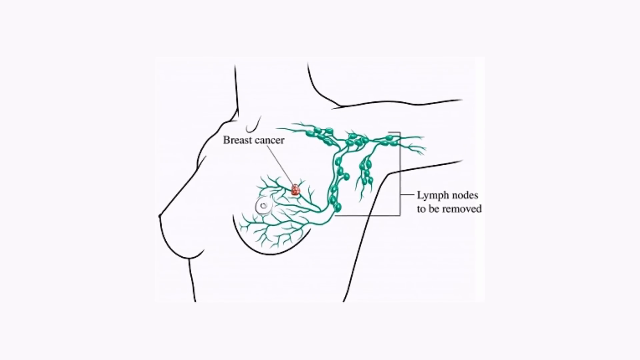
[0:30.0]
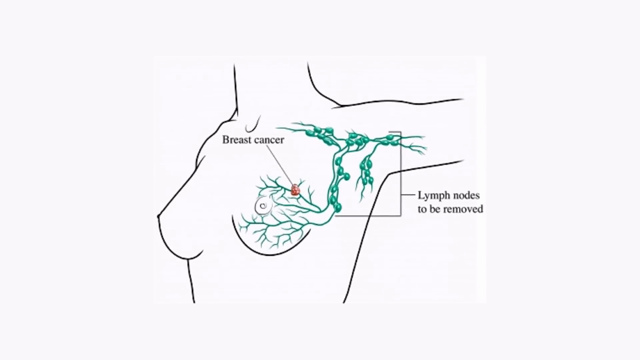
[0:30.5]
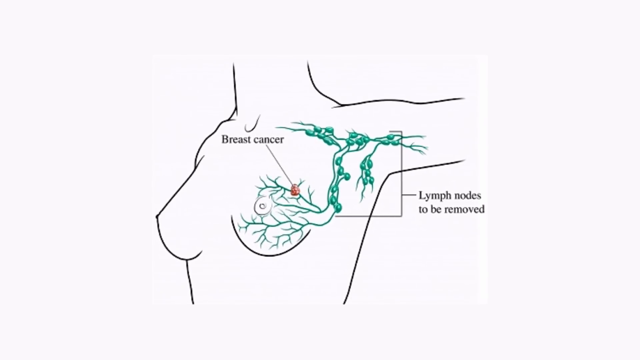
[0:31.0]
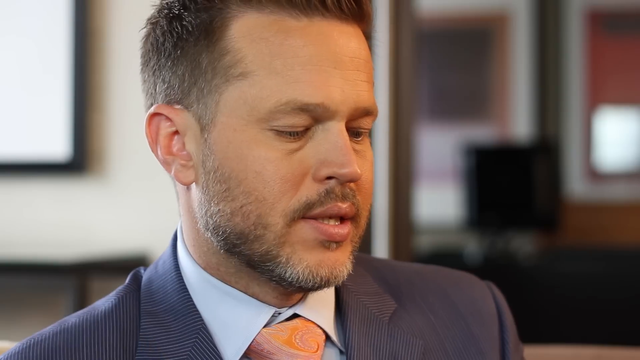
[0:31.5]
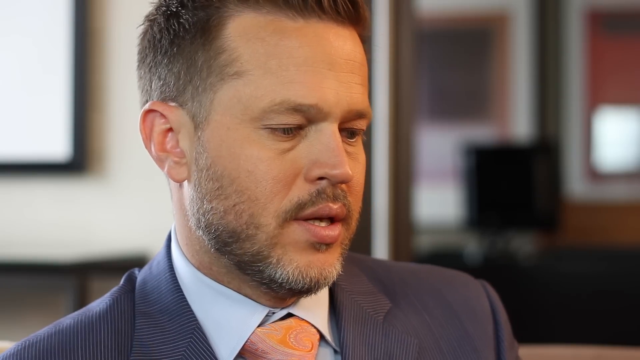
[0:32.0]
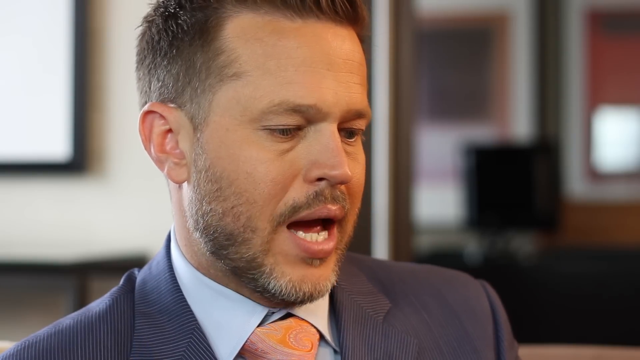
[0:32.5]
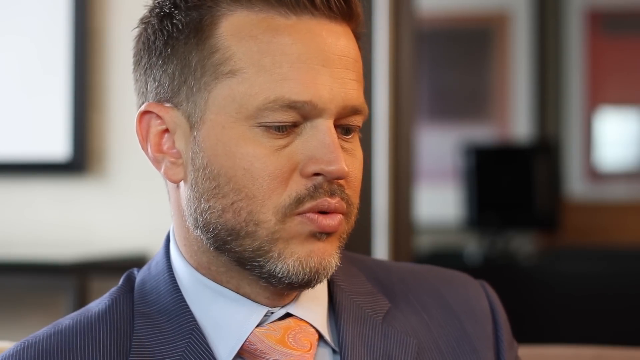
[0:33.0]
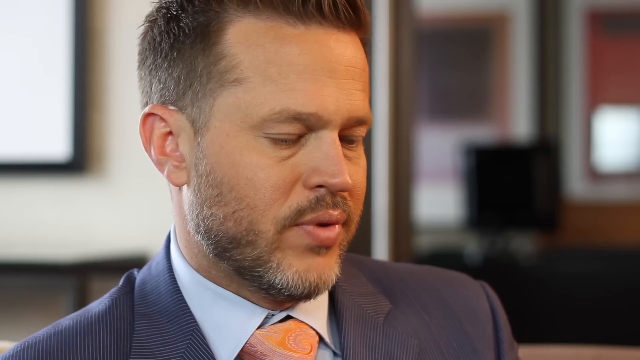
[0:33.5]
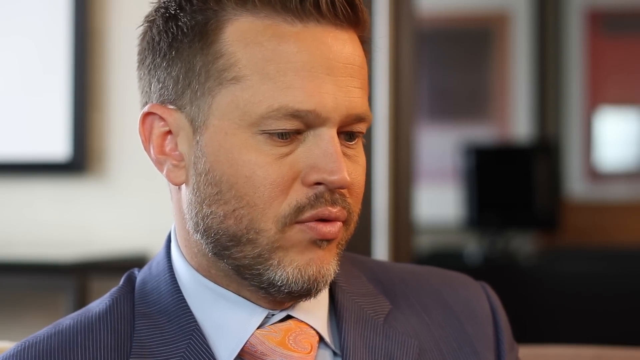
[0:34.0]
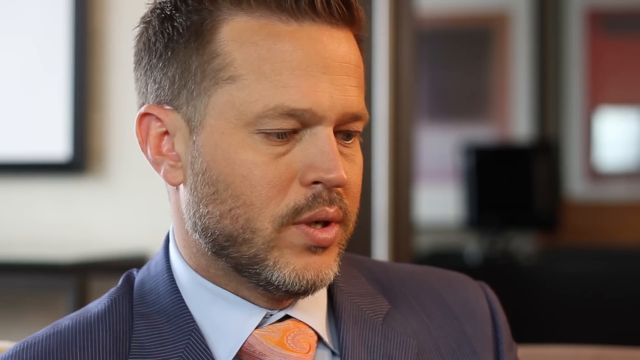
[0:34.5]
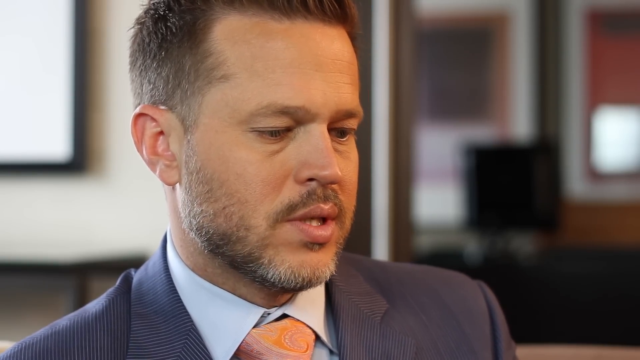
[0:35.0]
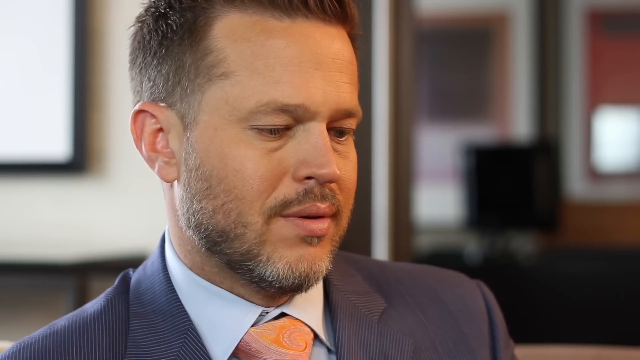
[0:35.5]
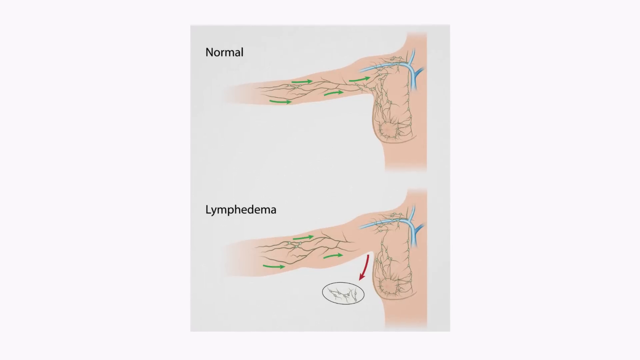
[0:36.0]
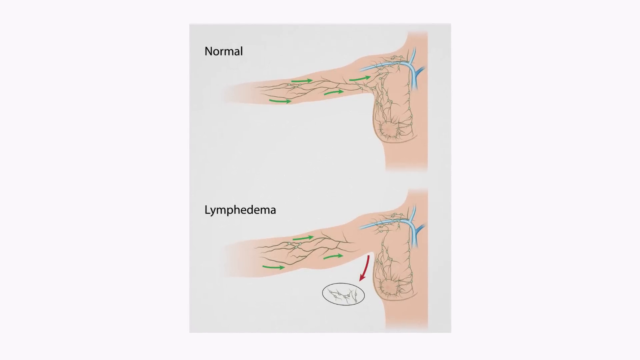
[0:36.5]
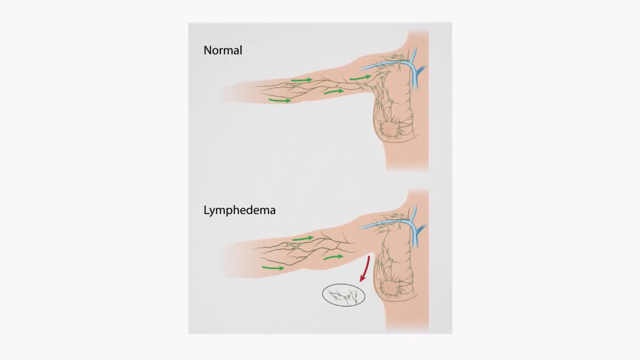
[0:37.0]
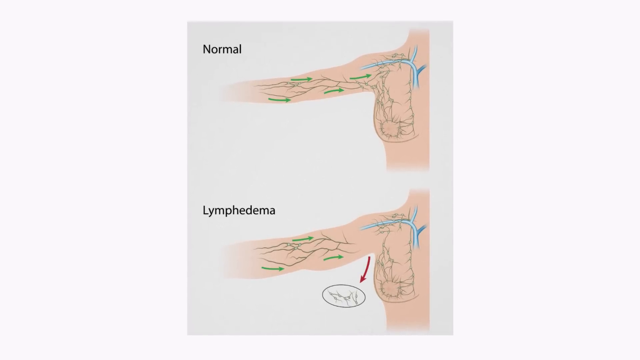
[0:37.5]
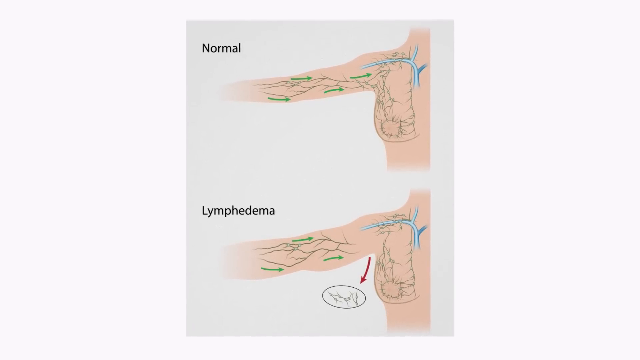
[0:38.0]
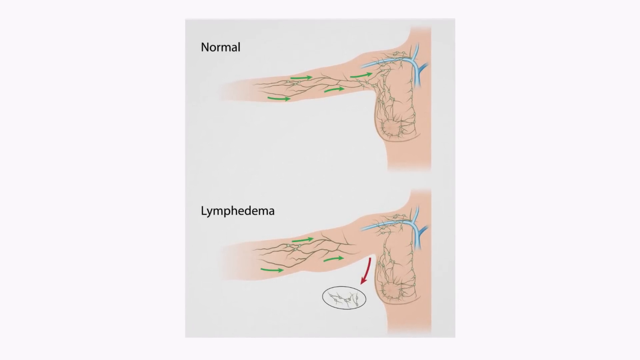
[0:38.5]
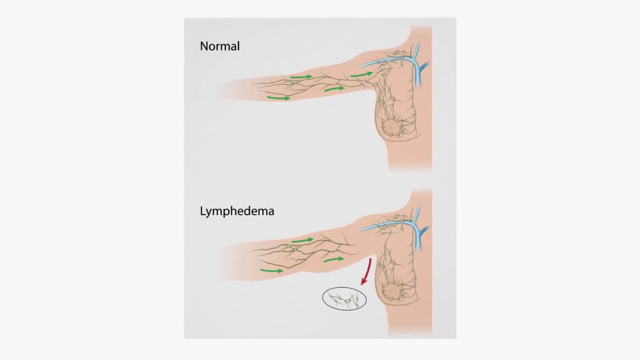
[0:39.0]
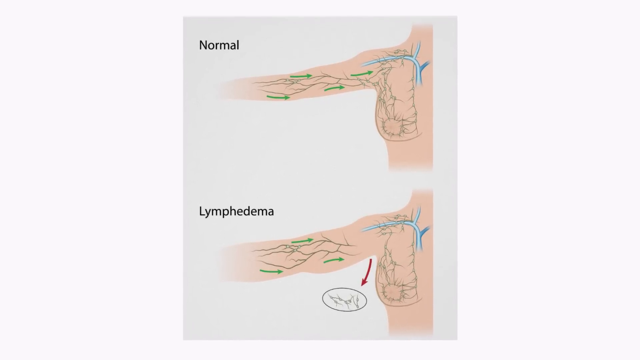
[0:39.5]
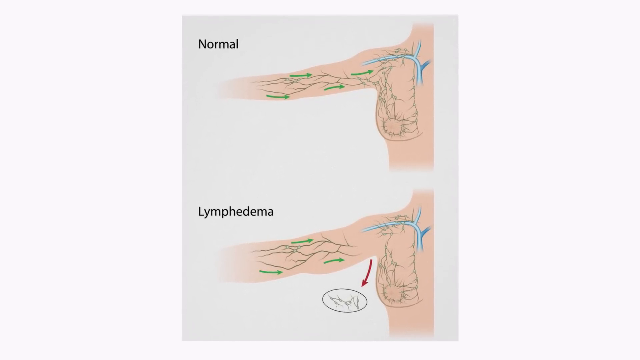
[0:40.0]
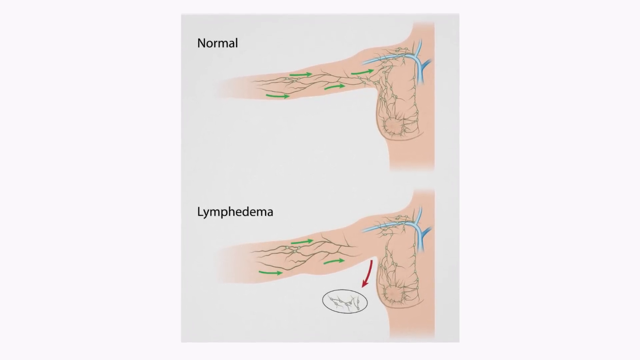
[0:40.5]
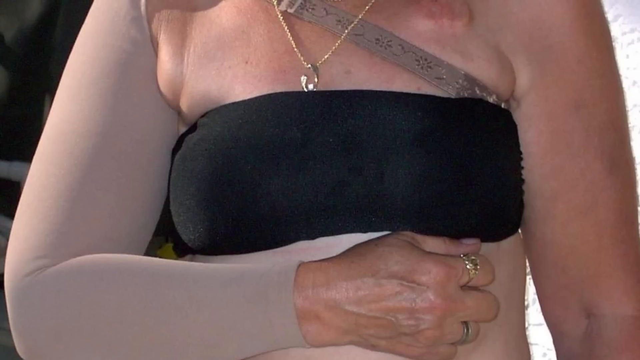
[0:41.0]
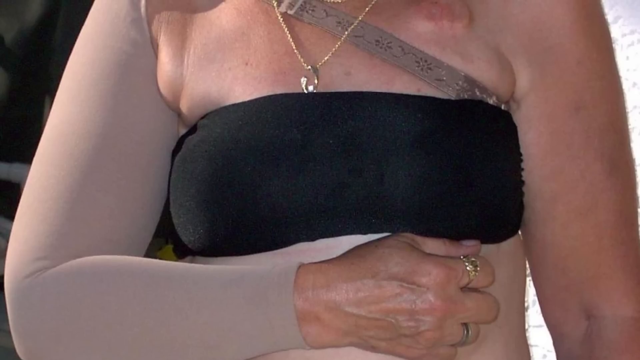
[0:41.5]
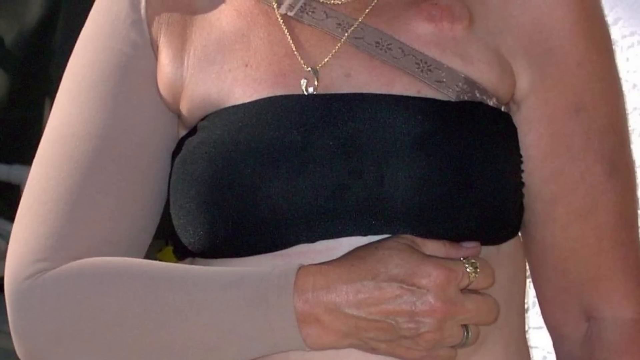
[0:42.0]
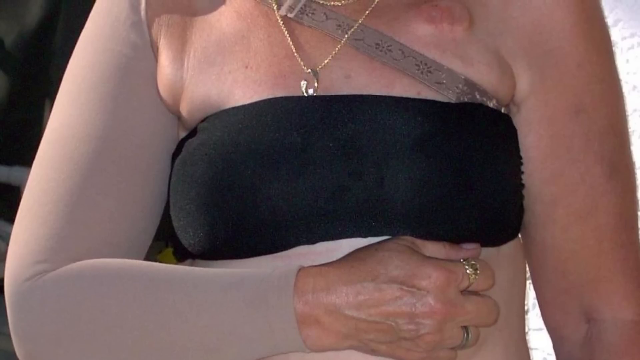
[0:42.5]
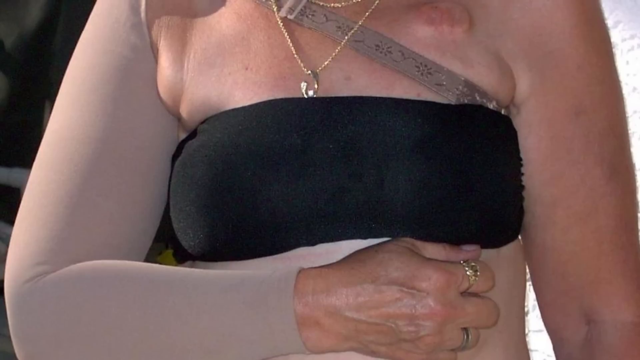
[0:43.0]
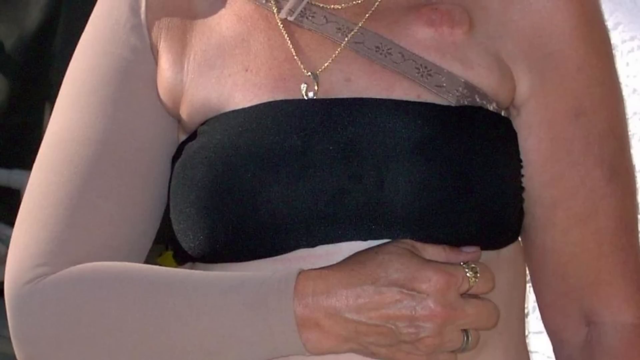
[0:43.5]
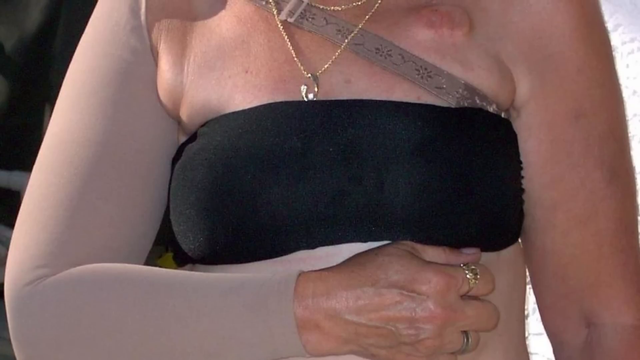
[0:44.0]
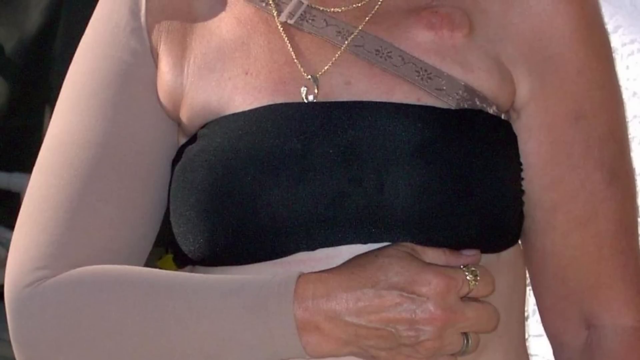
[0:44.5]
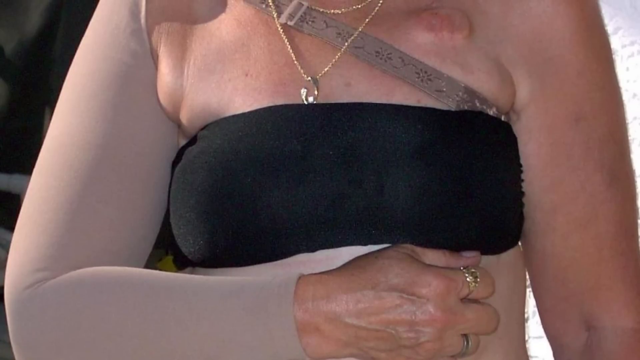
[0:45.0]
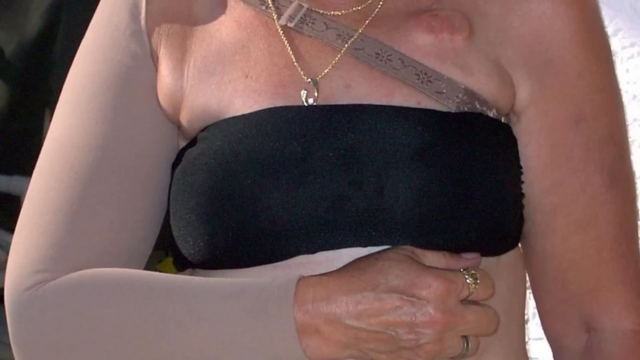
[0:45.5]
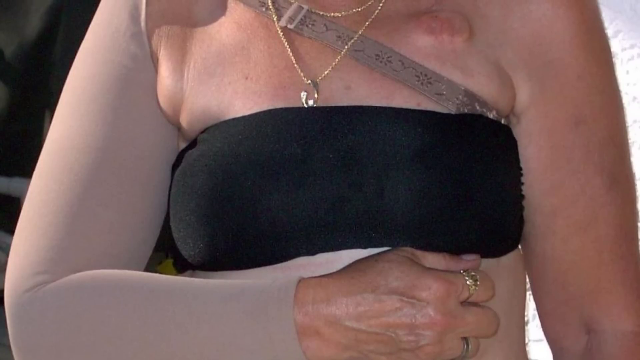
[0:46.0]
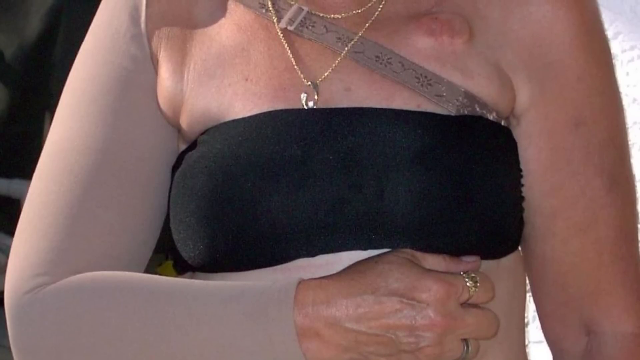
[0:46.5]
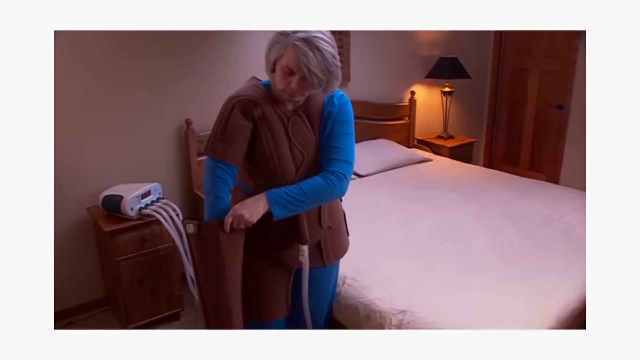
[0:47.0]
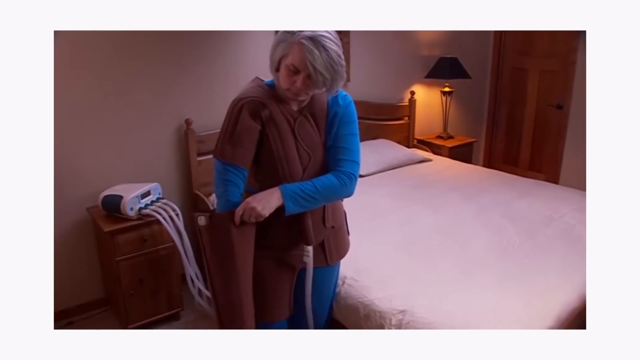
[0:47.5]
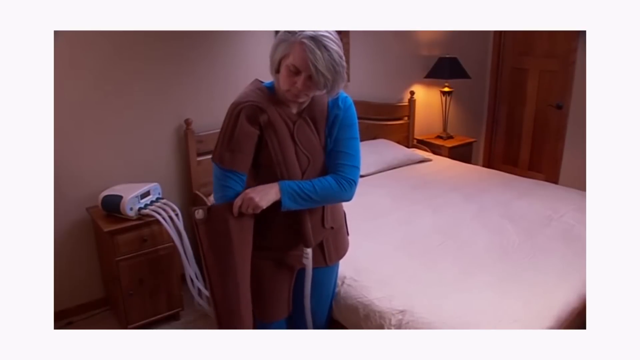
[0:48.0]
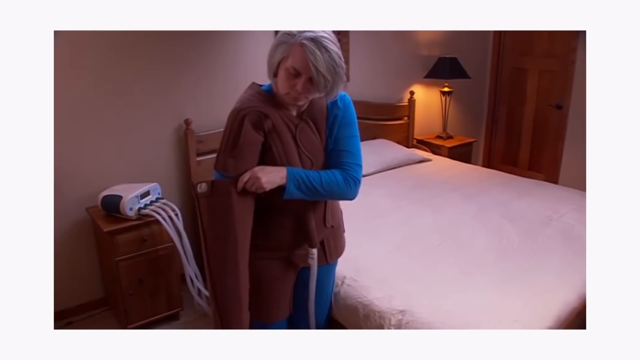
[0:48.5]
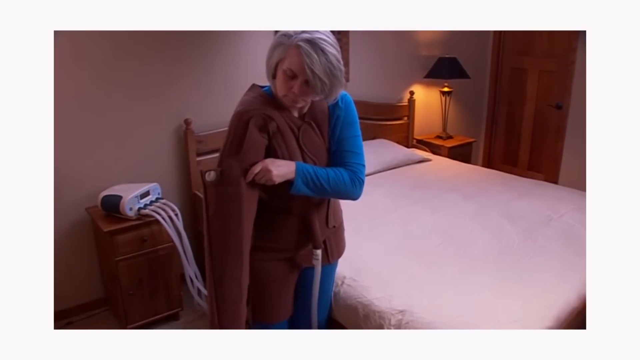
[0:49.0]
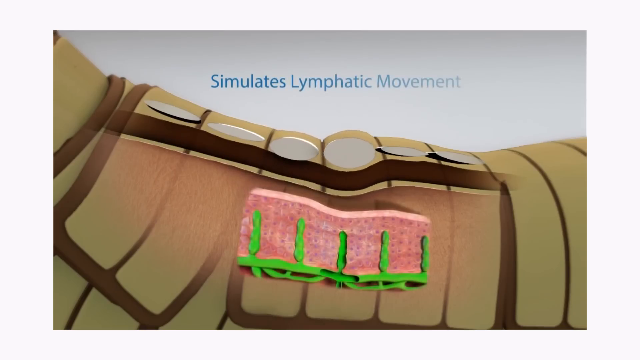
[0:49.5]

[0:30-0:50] On a white background, a black ink drawing shows a woman's neck and upper torso from the front left, with the arm raised up and out at the shoulder so the armpit area is visible. The drawing focuses on the left breast and its ductwork and lymph nodes, which are drawn in teal. Black text reading "breast cancer" points down to a small pink spot in the outer upper left quadrant of the left breast. To the right, black text reads "lymph nodes to be removed," and clusters of lymph nodes are shown along the edge of the left breast, continuing up into the armpit and the bottom of the shoulder, toward the clavicle, and branching out toward the arm and the chest. The video then changes back to the doctor, who looks down to the right while speaking about something he is looking at. He has a short beard and mustache, short brown dirty blonde hair and a charcoal gray pinstripe suit.